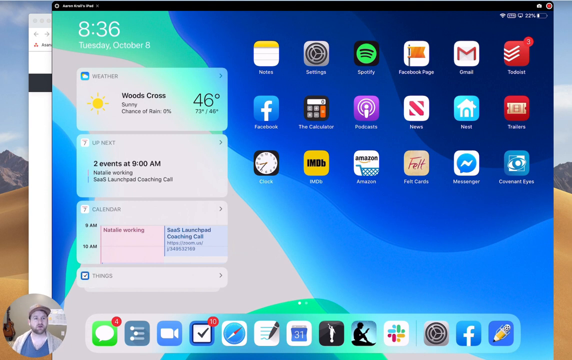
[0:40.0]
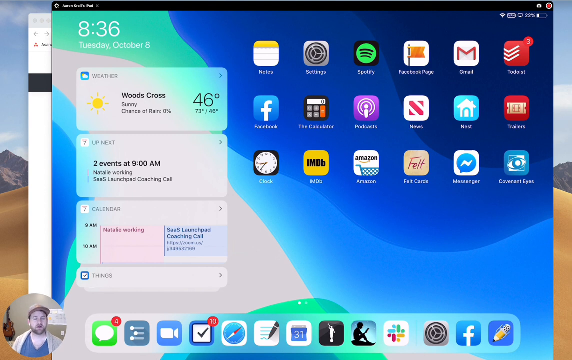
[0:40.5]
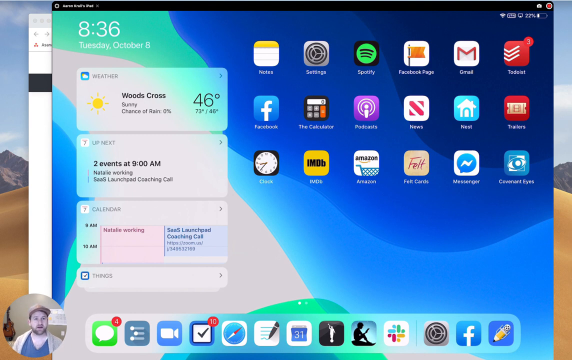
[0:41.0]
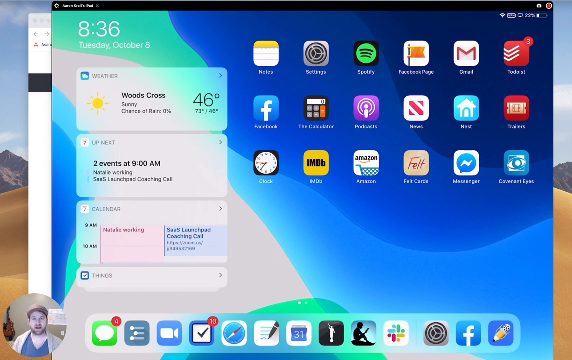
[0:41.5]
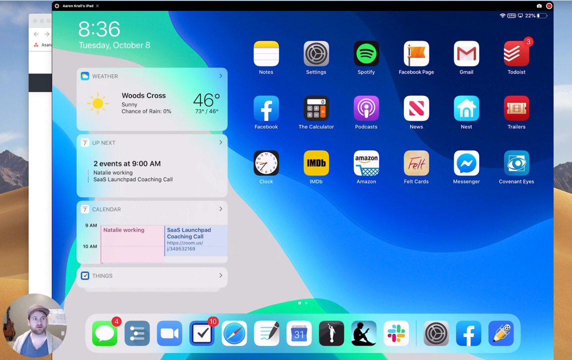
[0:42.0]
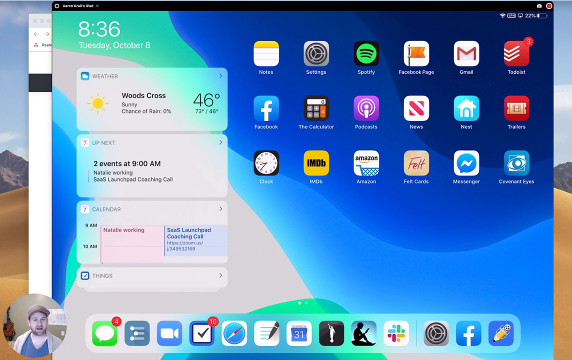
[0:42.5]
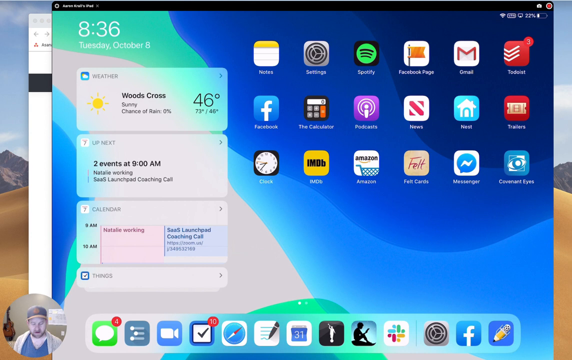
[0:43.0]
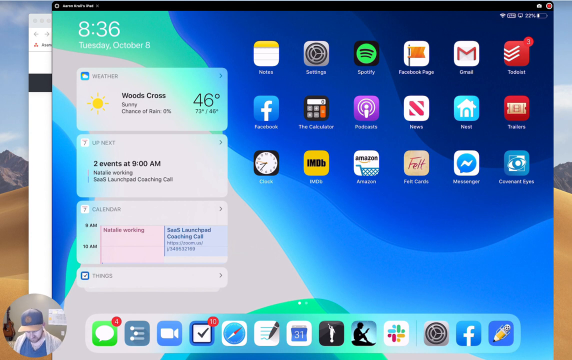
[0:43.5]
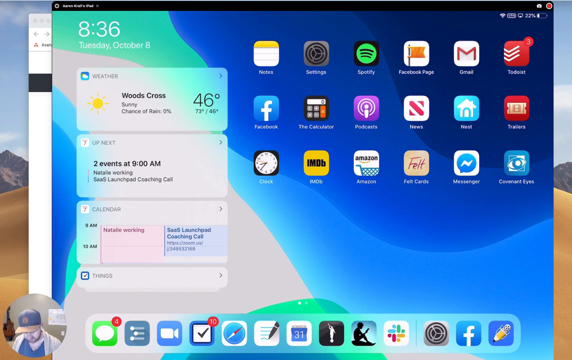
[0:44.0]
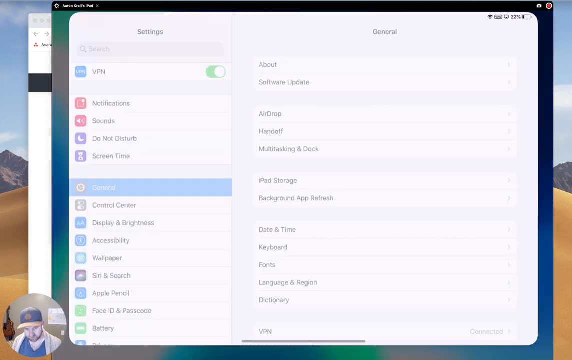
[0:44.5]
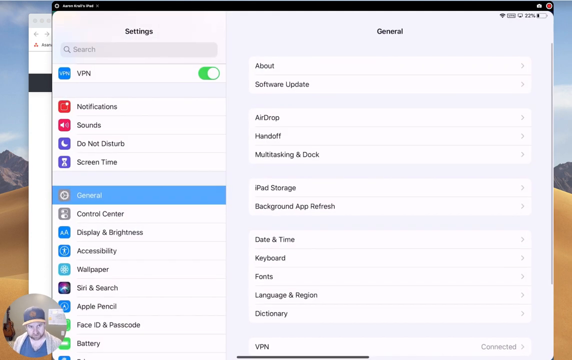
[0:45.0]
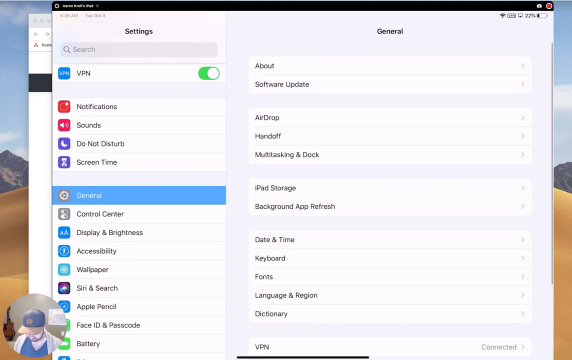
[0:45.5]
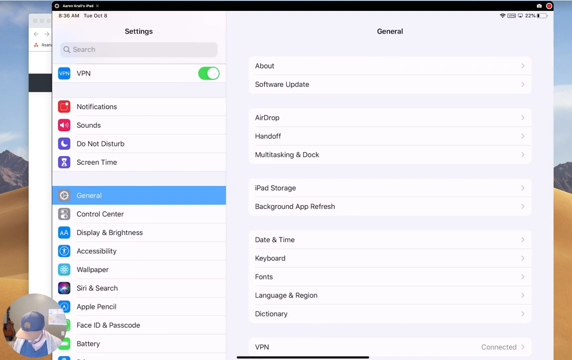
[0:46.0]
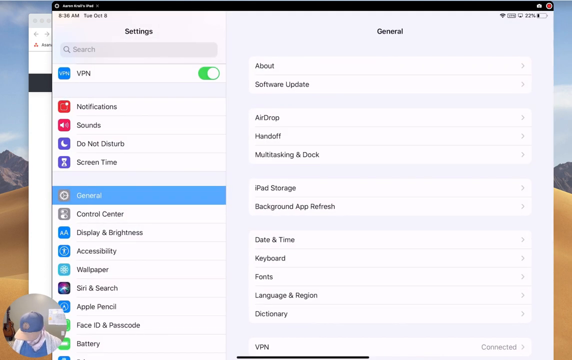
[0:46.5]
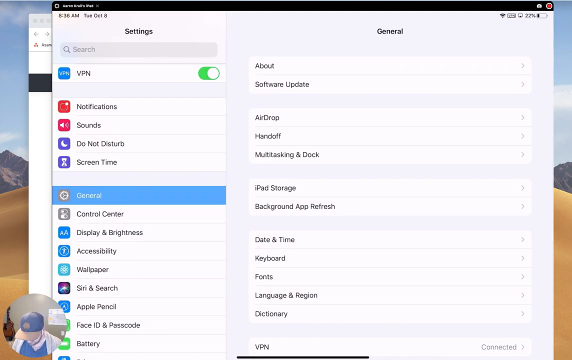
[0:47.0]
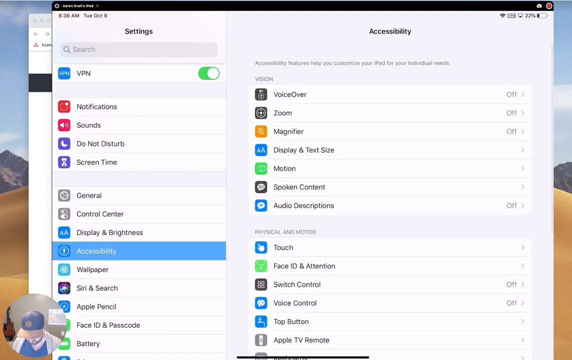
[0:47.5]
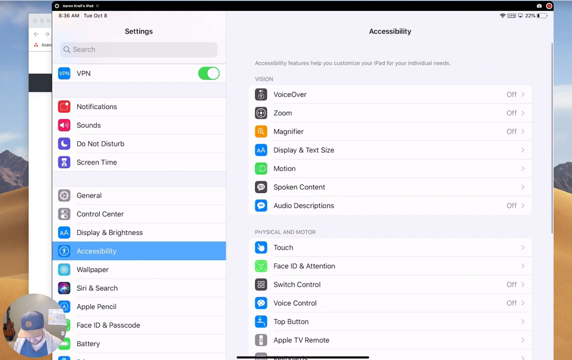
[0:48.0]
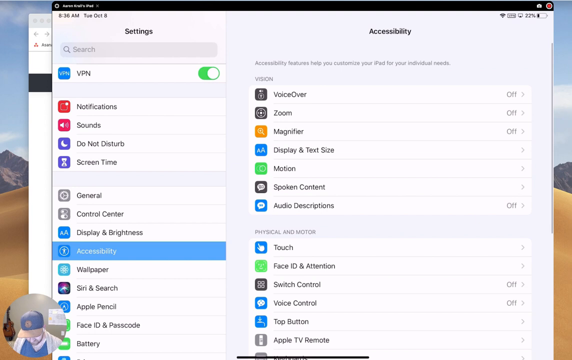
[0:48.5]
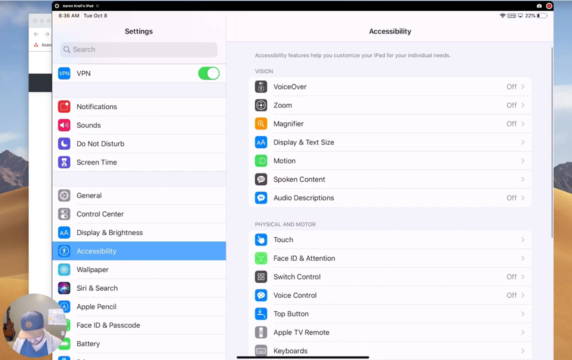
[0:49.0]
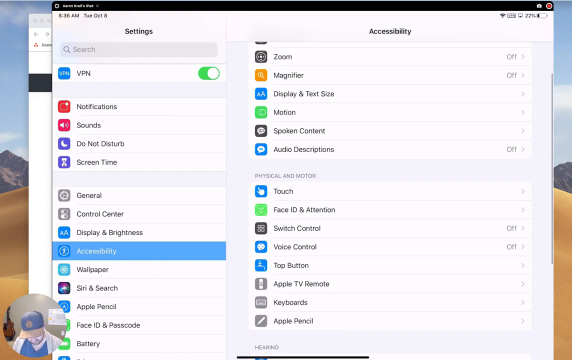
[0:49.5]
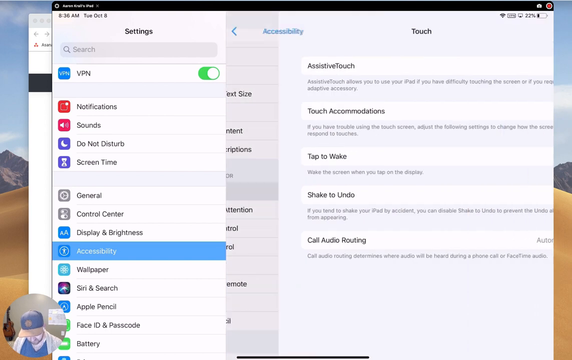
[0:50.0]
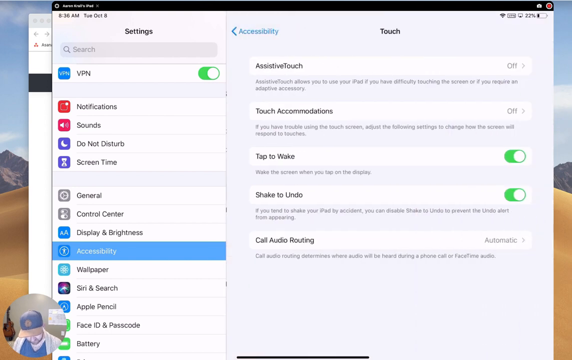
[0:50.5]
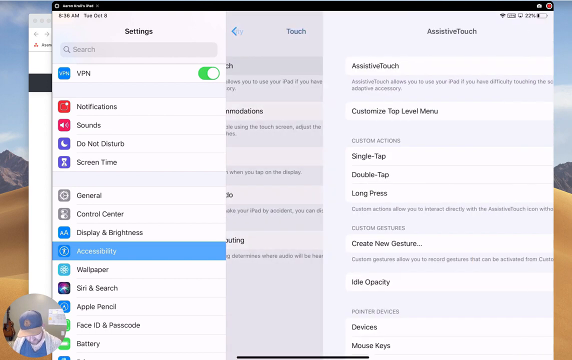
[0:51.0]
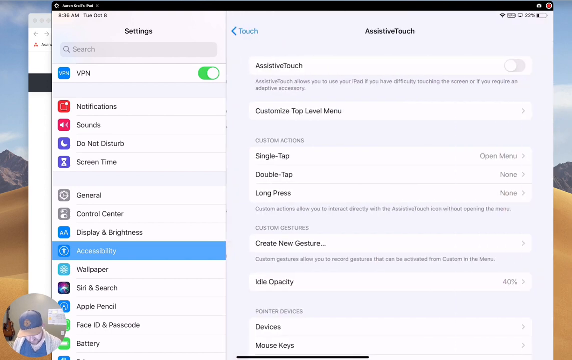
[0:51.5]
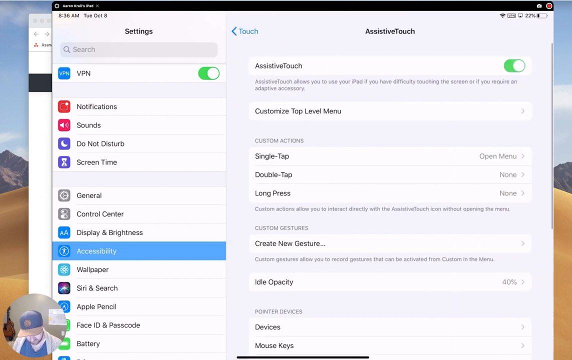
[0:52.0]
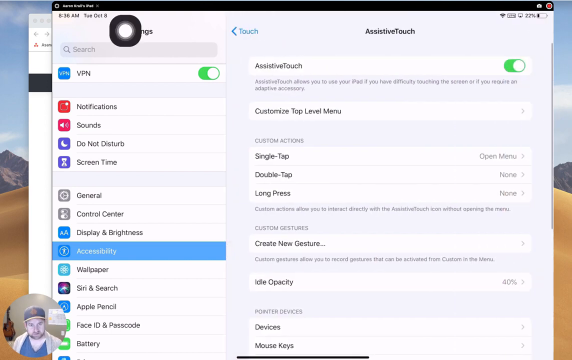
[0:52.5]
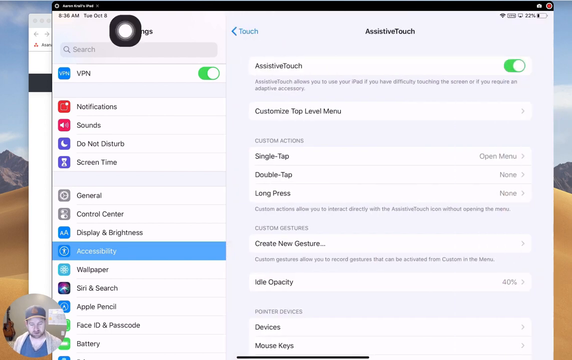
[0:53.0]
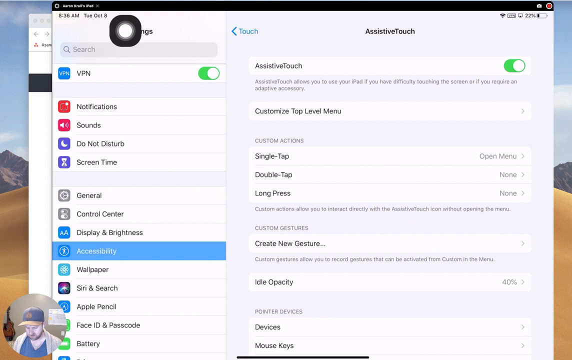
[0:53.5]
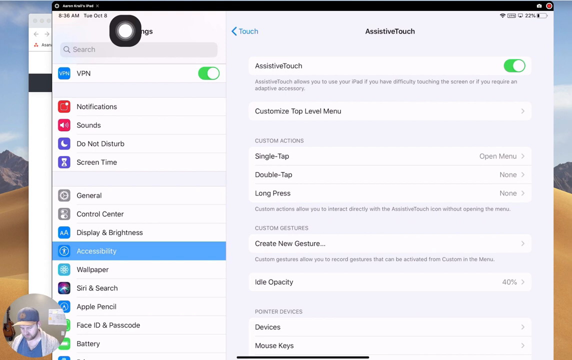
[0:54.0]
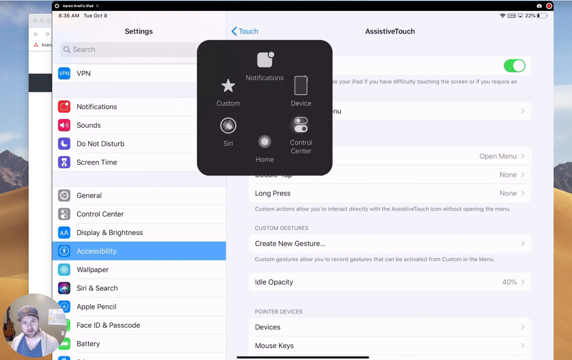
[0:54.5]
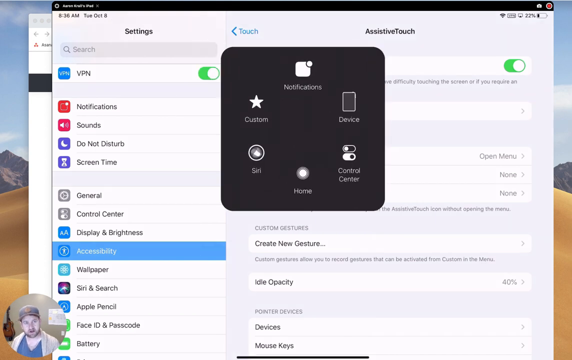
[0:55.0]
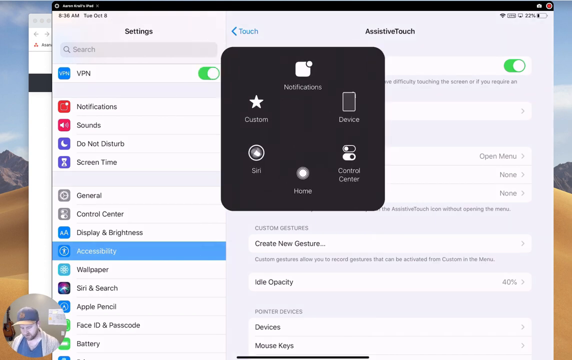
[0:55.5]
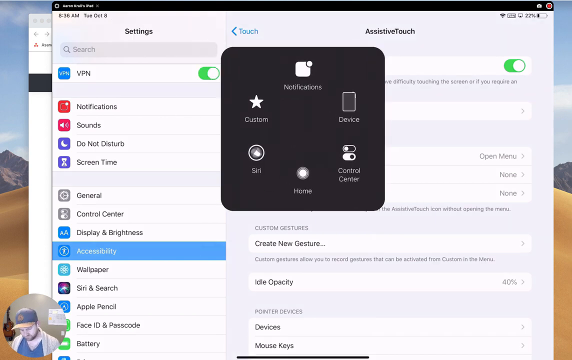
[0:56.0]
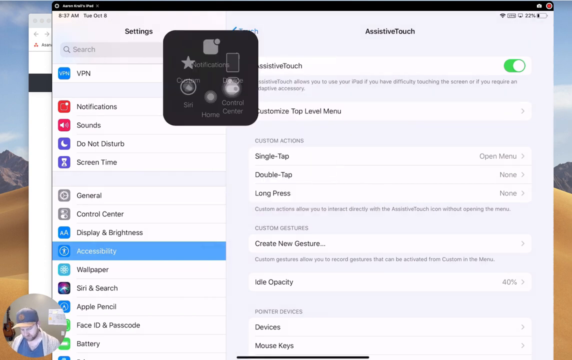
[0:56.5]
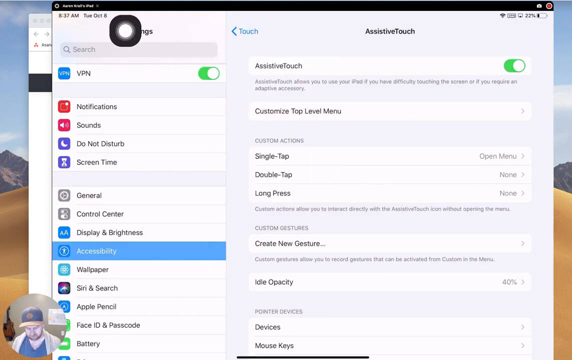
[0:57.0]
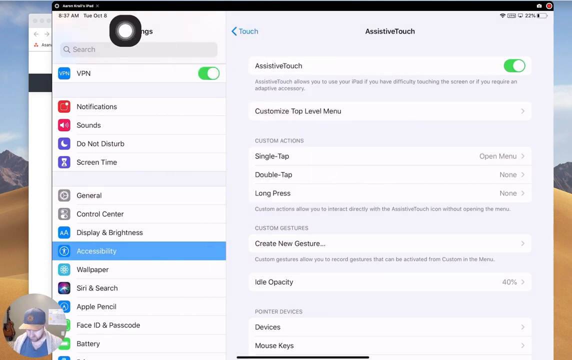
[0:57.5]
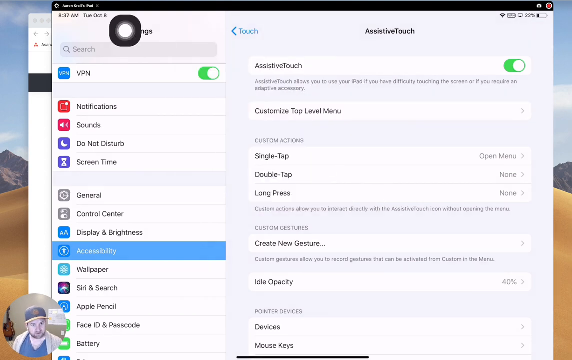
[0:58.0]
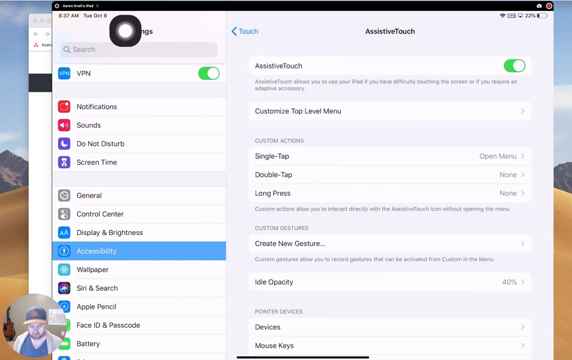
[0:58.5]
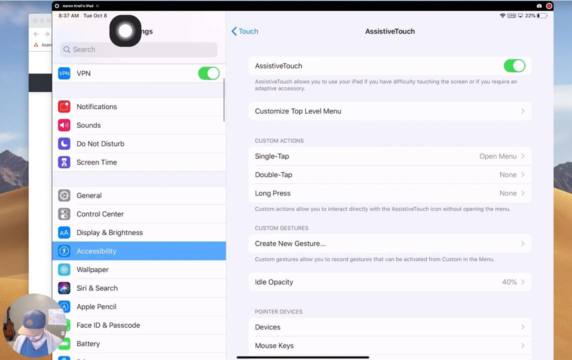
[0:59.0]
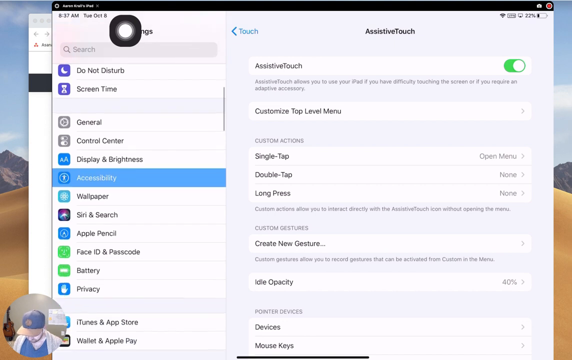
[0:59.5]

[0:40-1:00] The screen share shows a desktop background. The man opens the settings and goes over the general section, then quickly scrolls to the accessibility section and goes to assistive touch, where there is a giant wheel of options. He moves through various sections, showing the blank desktop screen with options including a calendar, "up next" and a weather section reading 46 degrees.